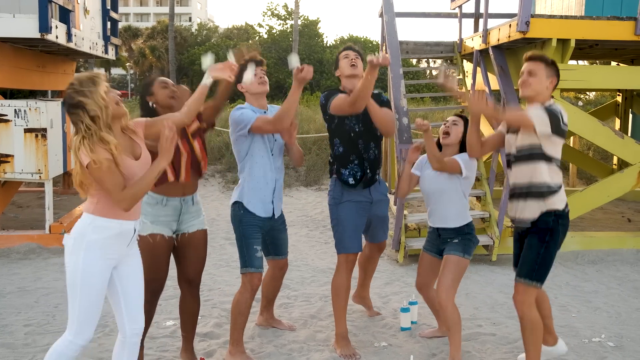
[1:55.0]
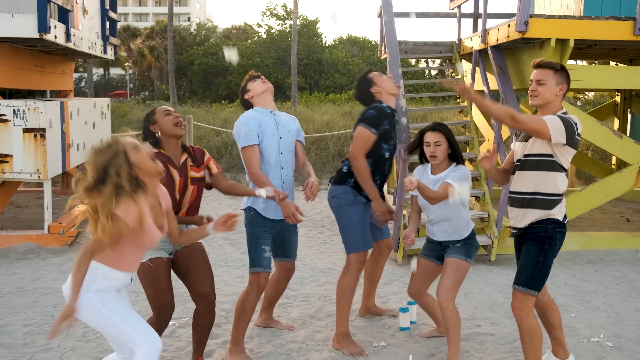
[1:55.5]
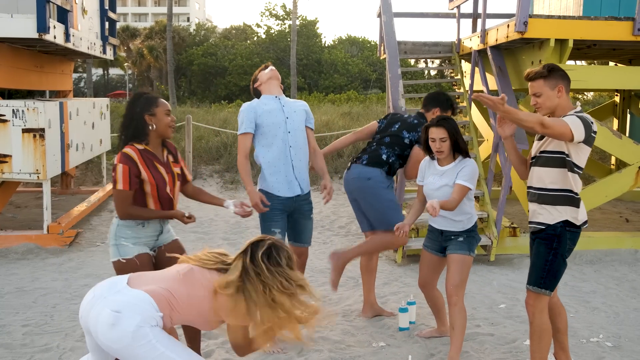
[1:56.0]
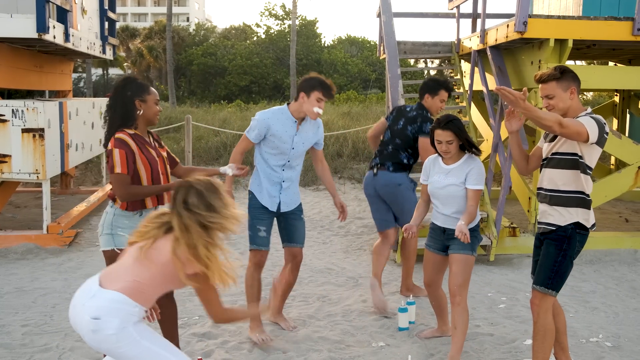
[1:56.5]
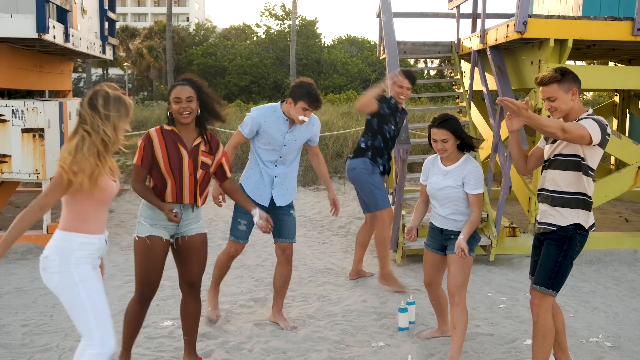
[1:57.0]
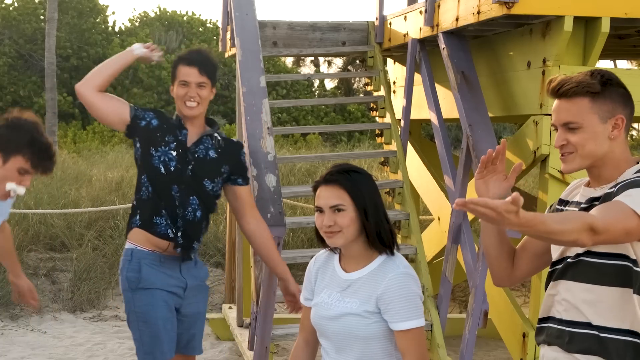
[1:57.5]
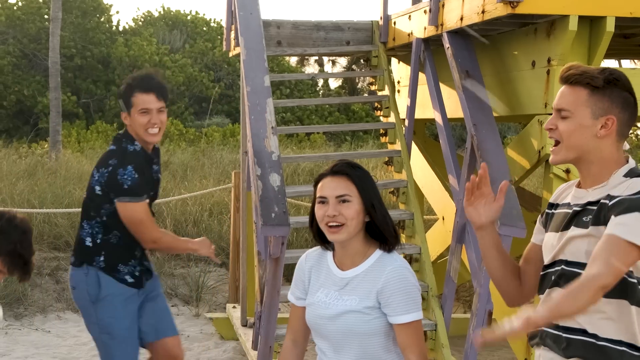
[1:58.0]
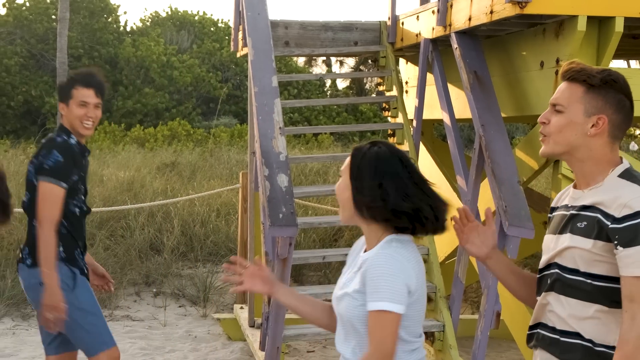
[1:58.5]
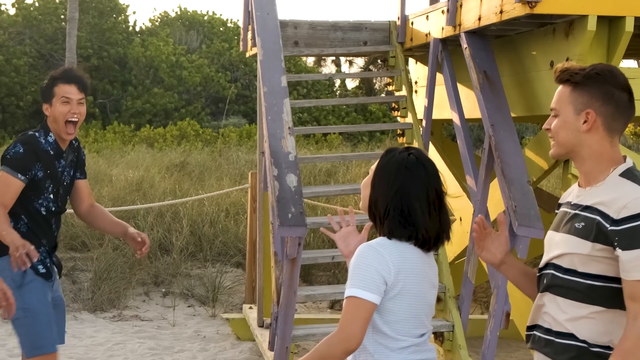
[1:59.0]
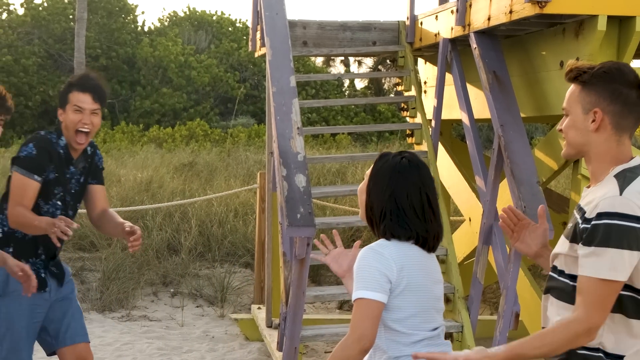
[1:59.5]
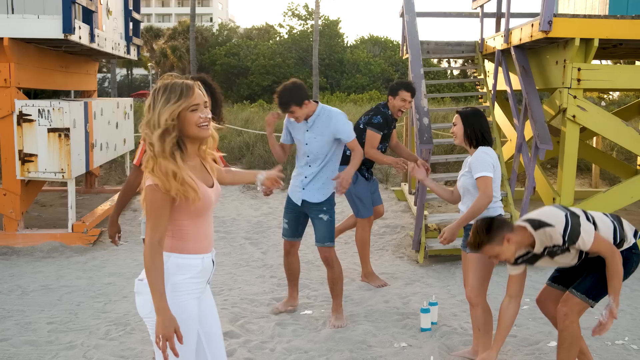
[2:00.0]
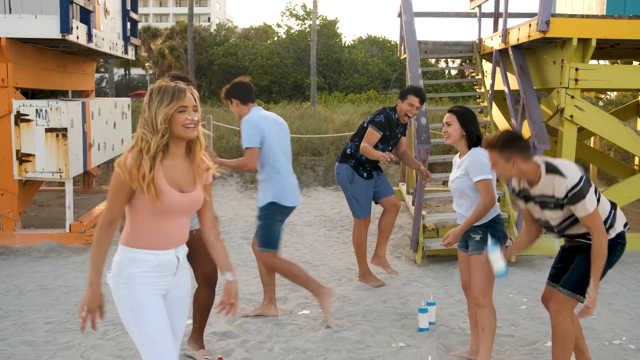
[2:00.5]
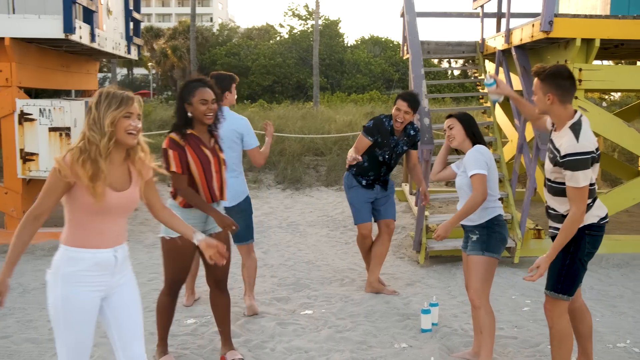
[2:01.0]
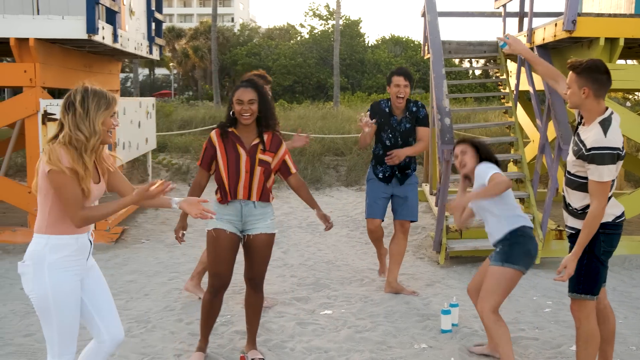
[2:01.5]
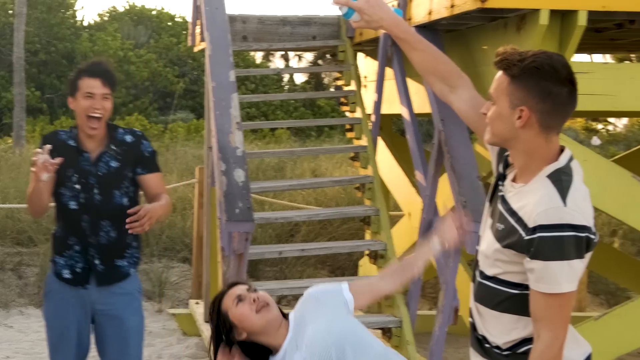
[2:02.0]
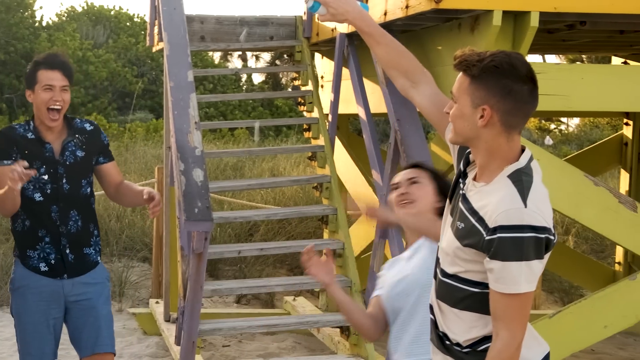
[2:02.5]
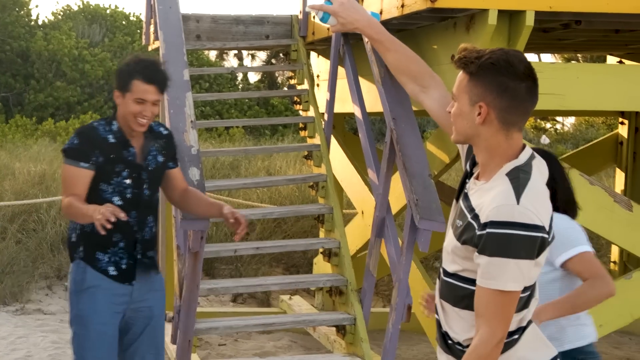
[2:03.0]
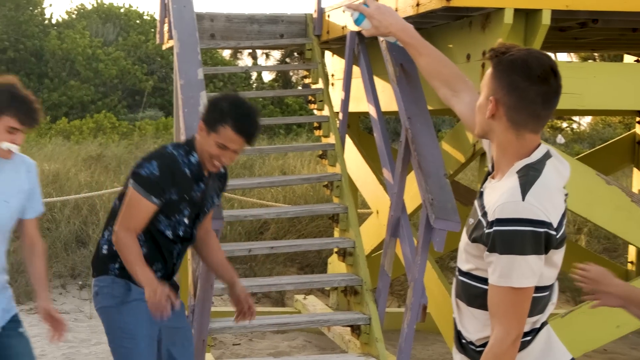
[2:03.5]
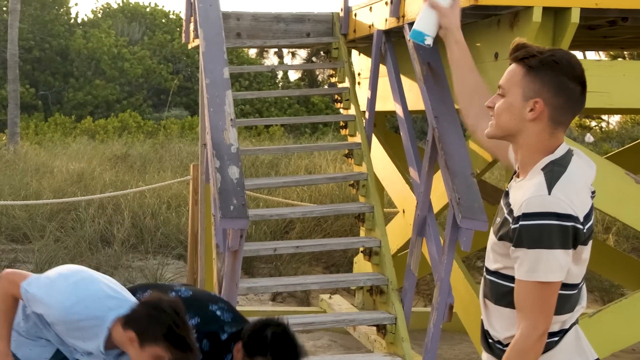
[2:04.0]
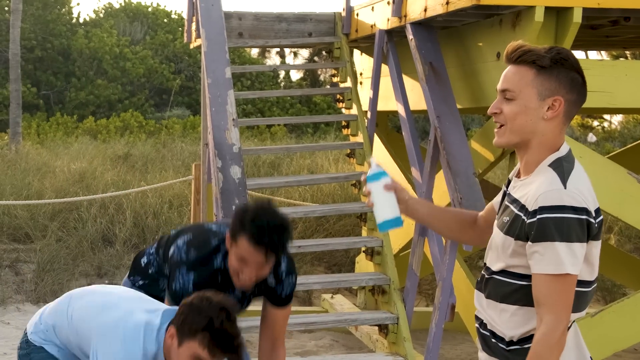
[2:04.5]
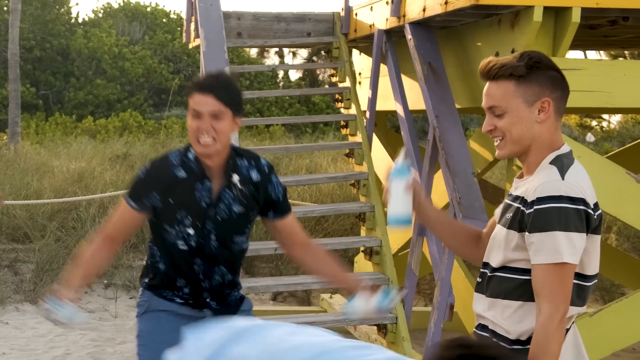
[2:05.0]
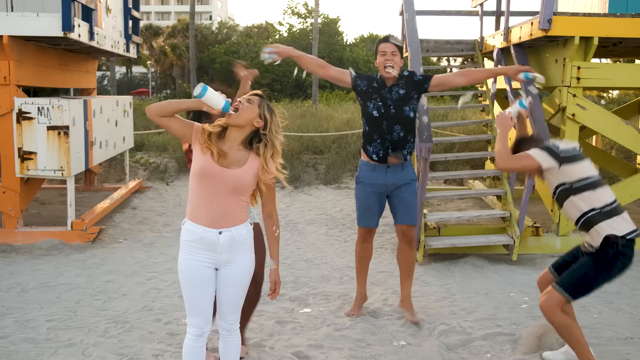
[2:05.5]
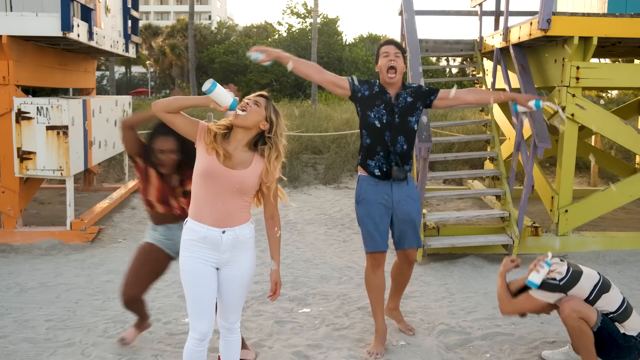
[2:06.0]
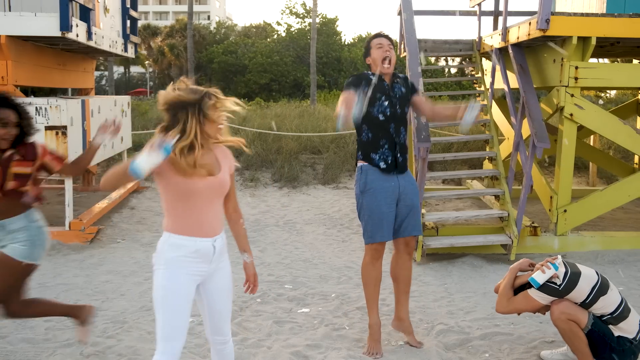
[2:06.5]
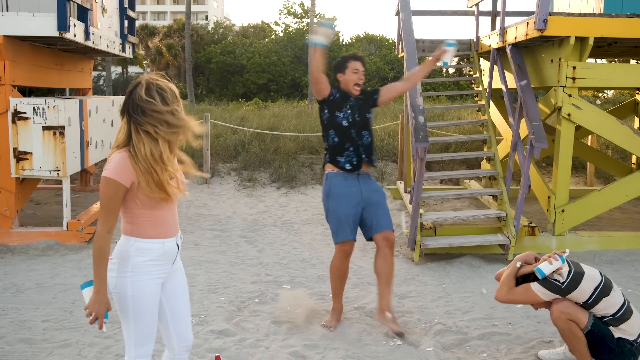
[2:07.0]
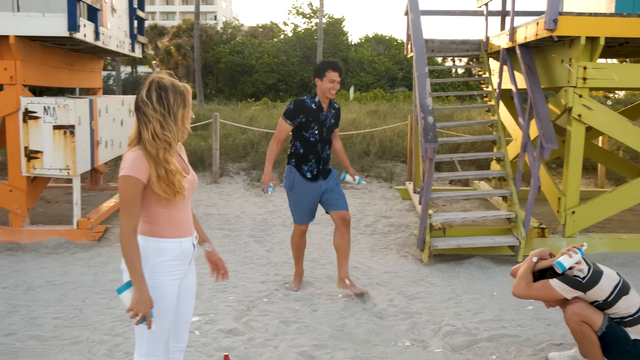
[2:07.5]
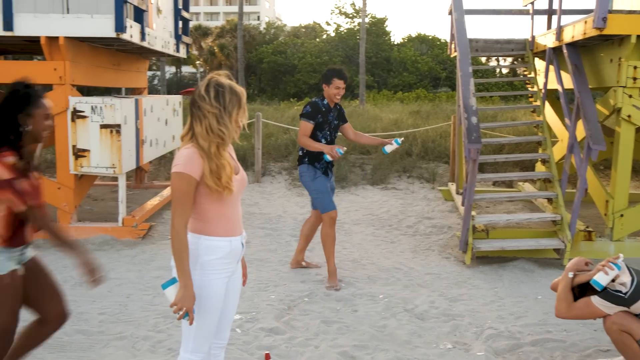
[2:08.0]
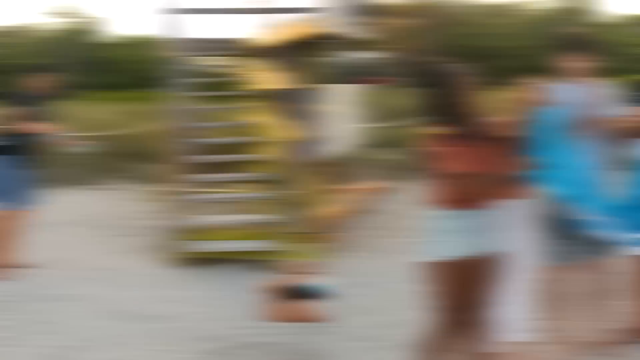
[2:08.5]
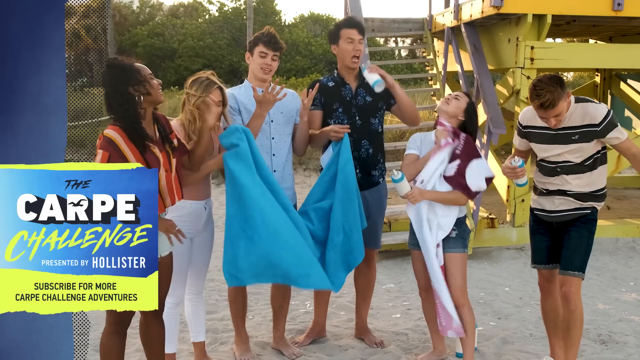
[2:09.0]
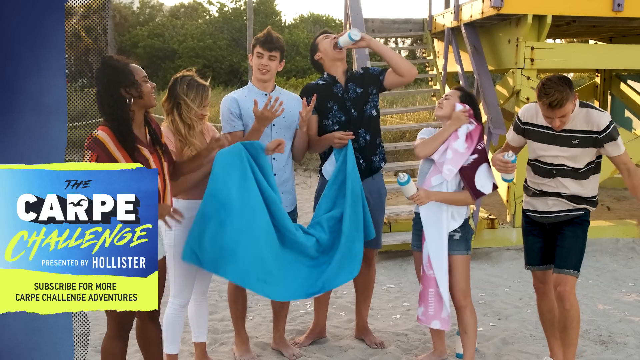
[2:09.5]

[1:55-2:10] All six wait to see the results of their challenge as they raise their arms. Chachi doesn't get the whipped cream to fly very far, and it isn't in a place where she can catch it with her mouth. Jojo's whipped cream also doesn't fly very much, and she doesn't even get a chance to catch it. Hayes flips the whipped cream high enough and catches it in his mouth, successful again. Next to him, Aaron's whipped cream goes flying but a little too far for him to reach with his mouth. Haley's whipped cream doesn't really fly far and she can't catch it. Damon's whipped cream just sort of falls off his wrist, as it has before. Afterward everyone is just having fun: Chachi puts a large dollop of whipped cream into her mouth, and Aaron holds two cans of whipped cream and sort of flails his arms while holding the nozzles, so whipped cream goes everywhere. Damon sort of crouches down on his knees in the sand, covering his head so he doesn't get whipped cream in his hair. At the end, the first four participants share a blue towel to wipe the whipped cream off their faces and hair, Haley does the same with a white towel, and Damon shakes whatever whipped cream is on his hand off of it.